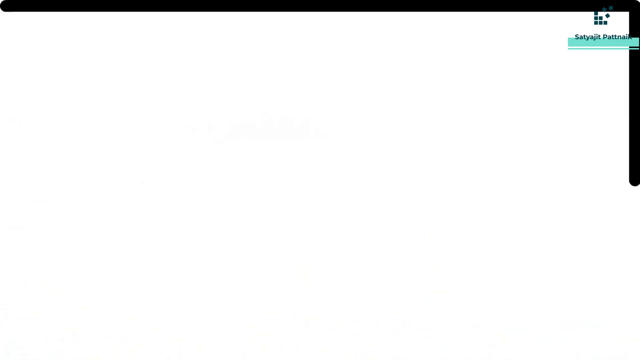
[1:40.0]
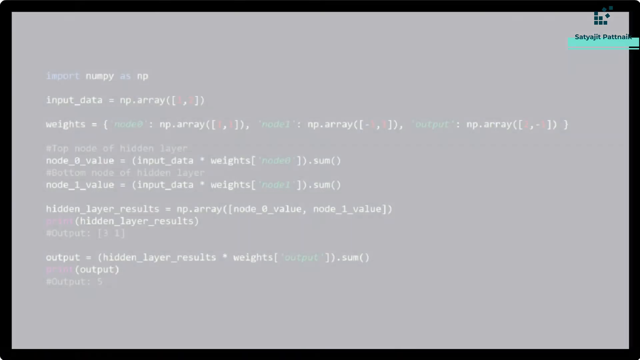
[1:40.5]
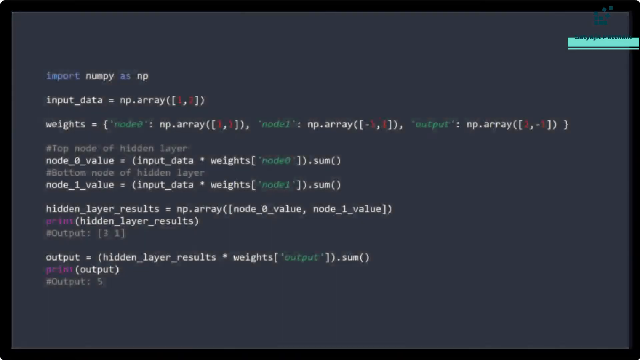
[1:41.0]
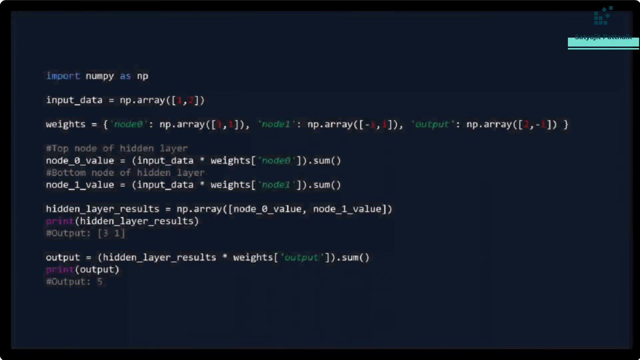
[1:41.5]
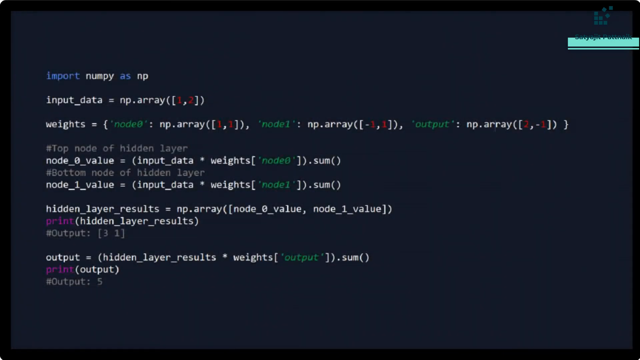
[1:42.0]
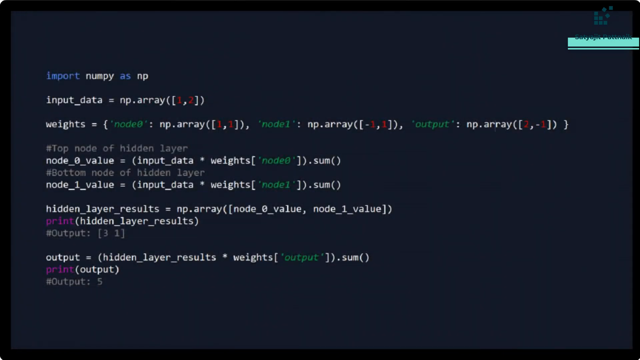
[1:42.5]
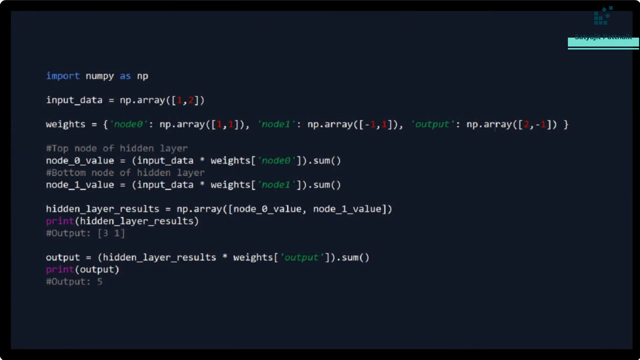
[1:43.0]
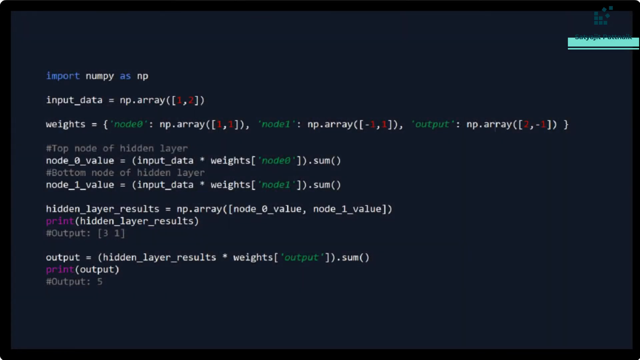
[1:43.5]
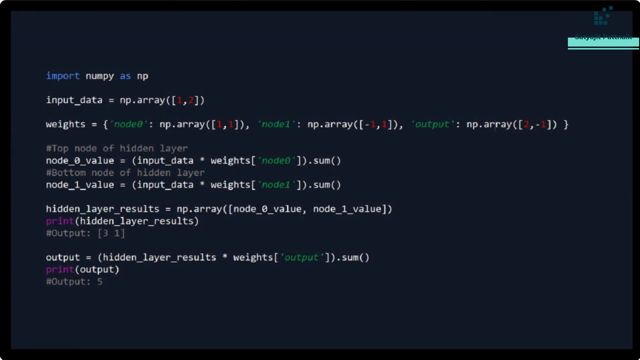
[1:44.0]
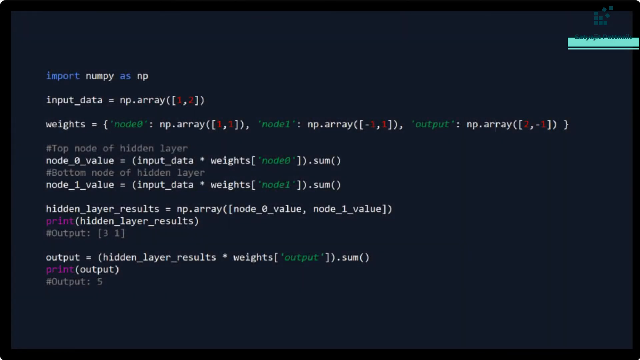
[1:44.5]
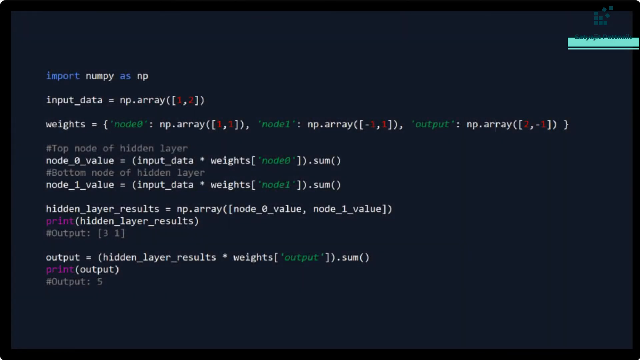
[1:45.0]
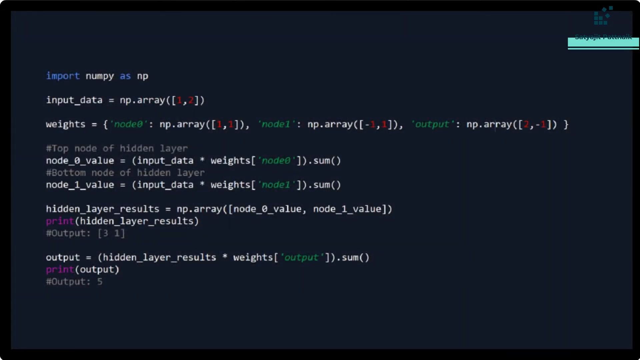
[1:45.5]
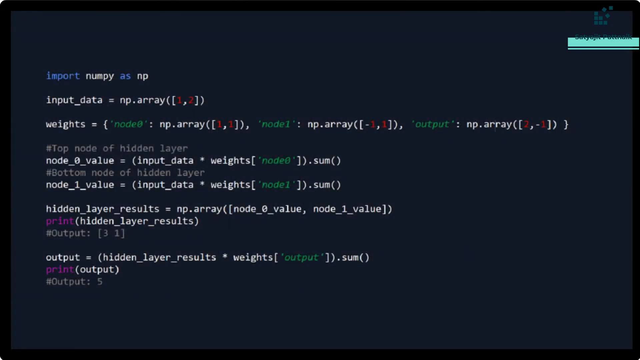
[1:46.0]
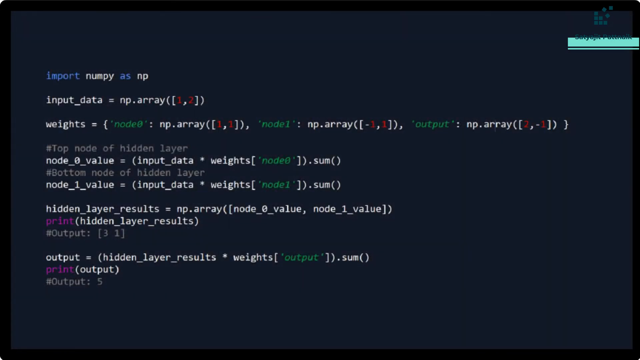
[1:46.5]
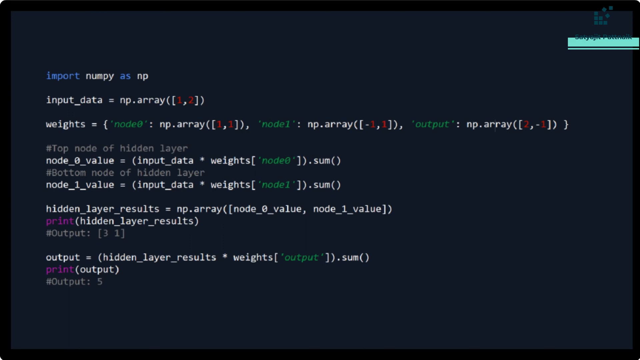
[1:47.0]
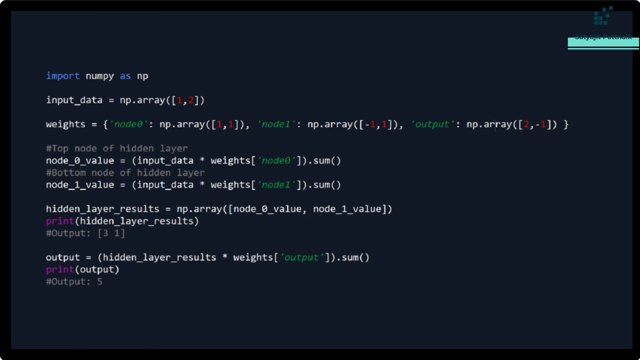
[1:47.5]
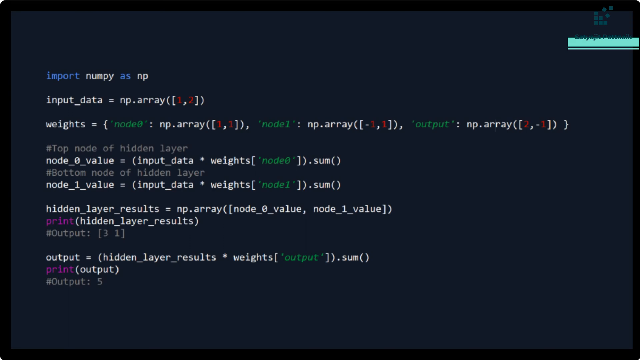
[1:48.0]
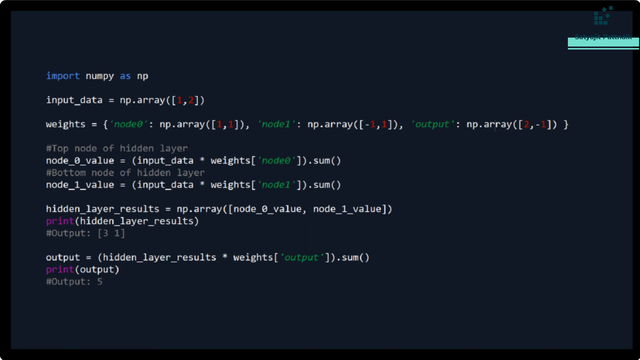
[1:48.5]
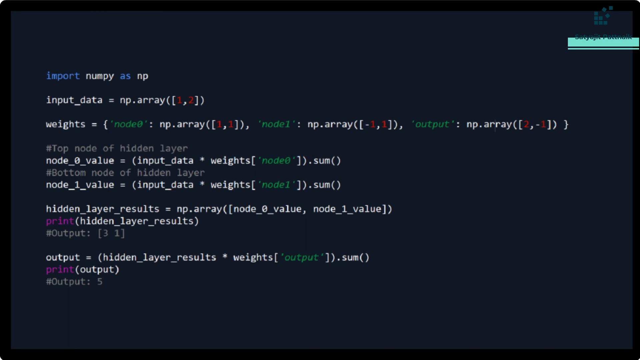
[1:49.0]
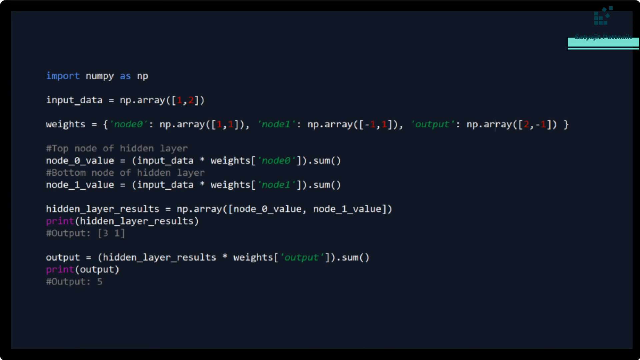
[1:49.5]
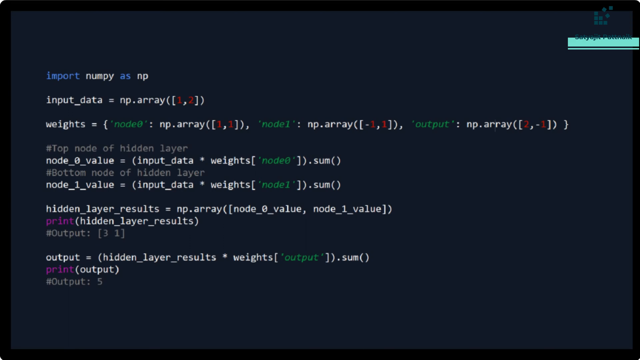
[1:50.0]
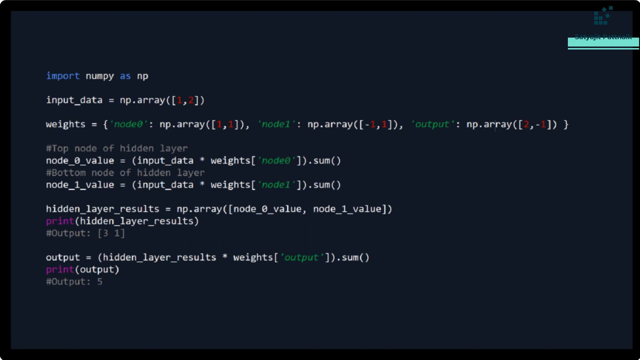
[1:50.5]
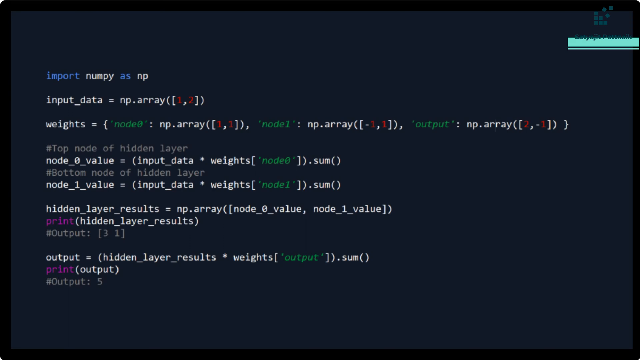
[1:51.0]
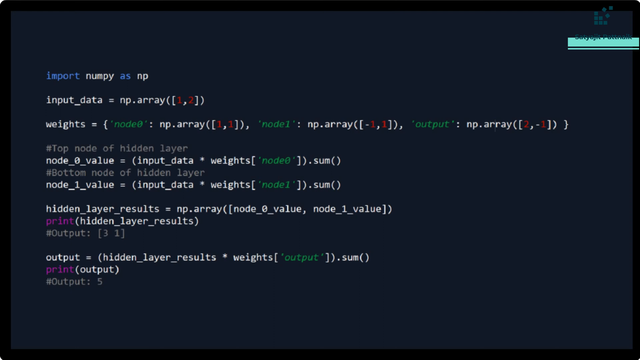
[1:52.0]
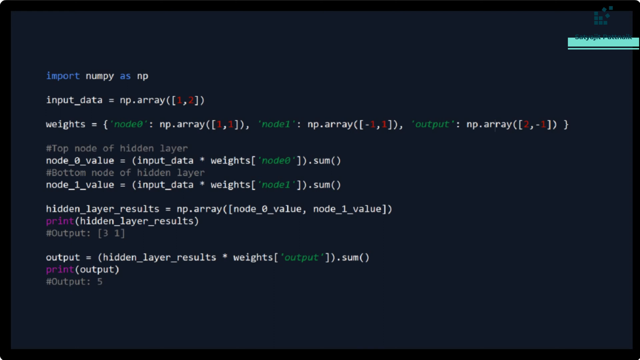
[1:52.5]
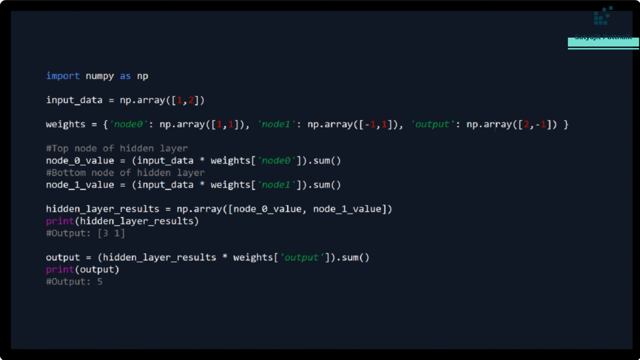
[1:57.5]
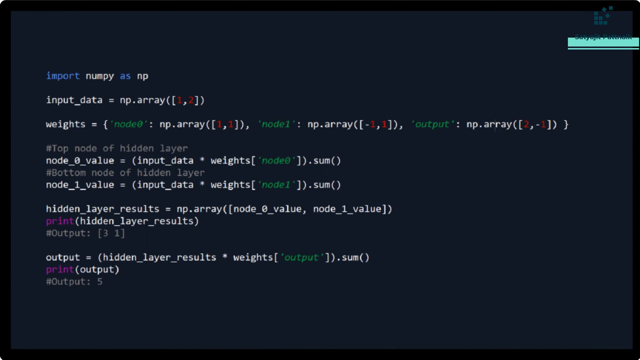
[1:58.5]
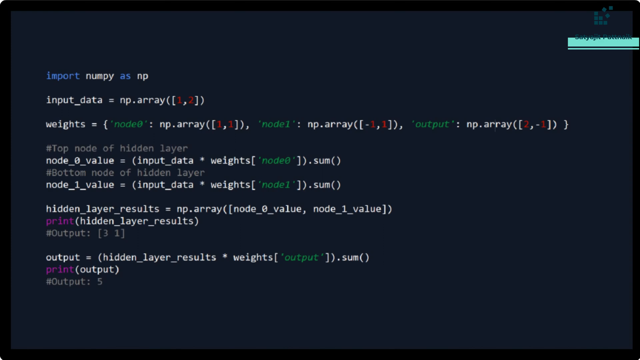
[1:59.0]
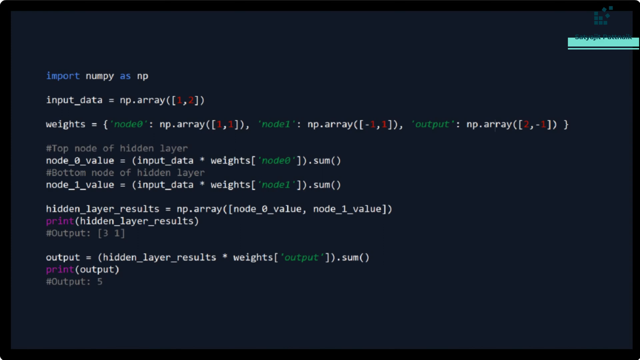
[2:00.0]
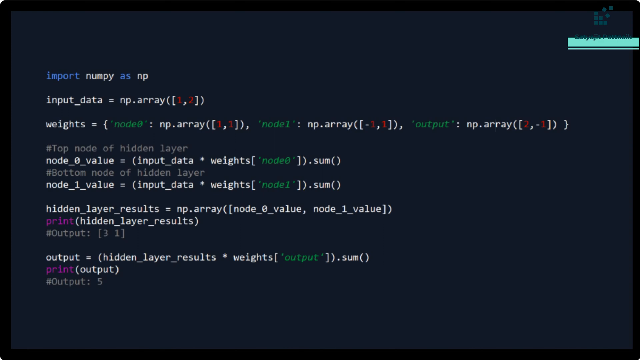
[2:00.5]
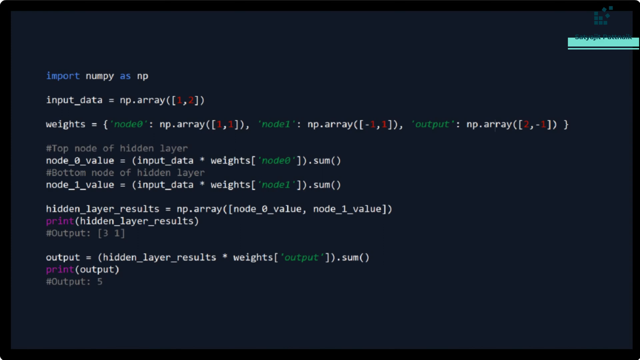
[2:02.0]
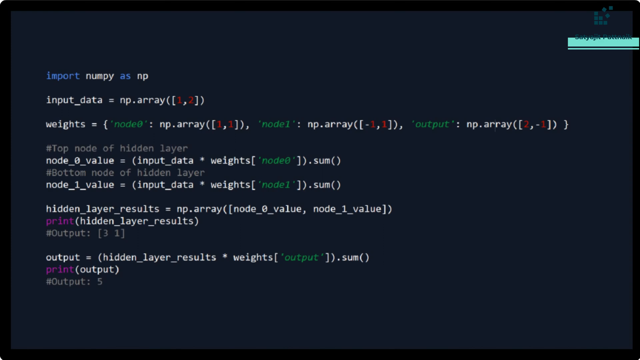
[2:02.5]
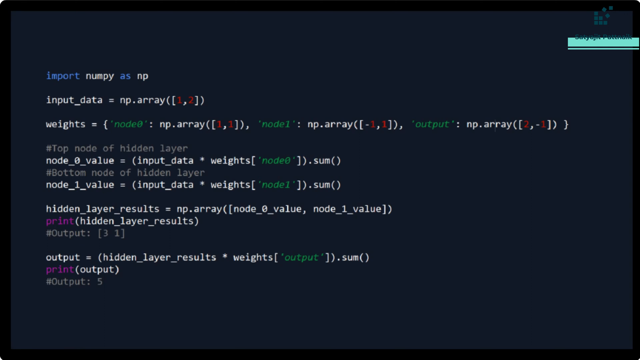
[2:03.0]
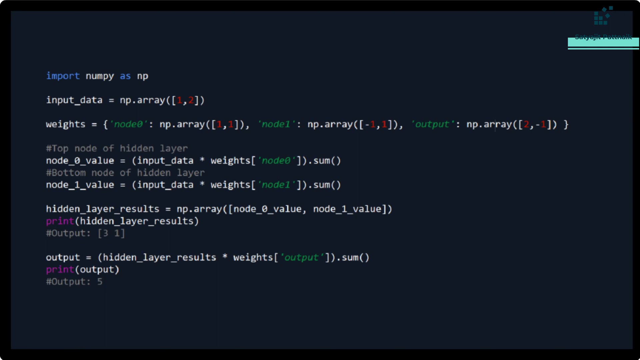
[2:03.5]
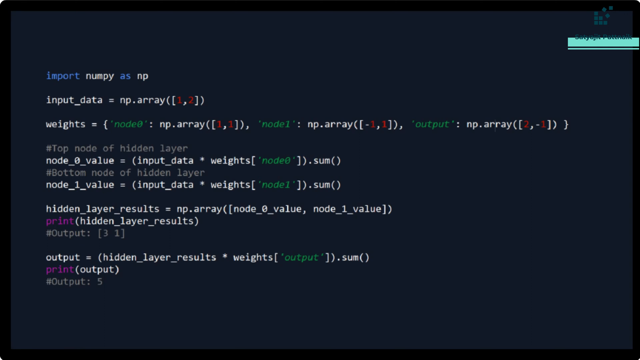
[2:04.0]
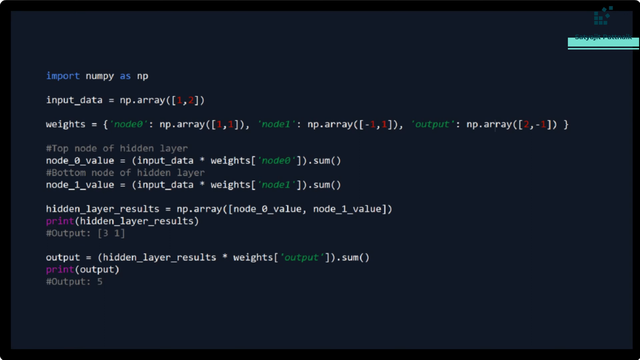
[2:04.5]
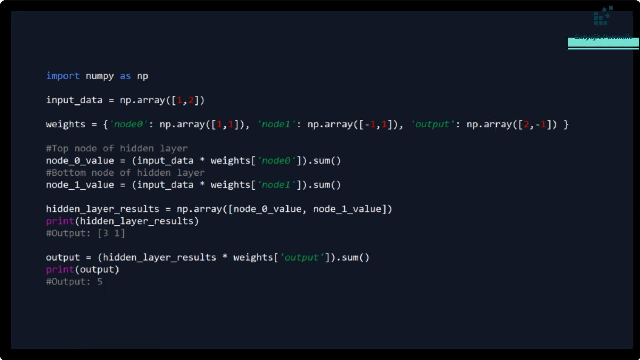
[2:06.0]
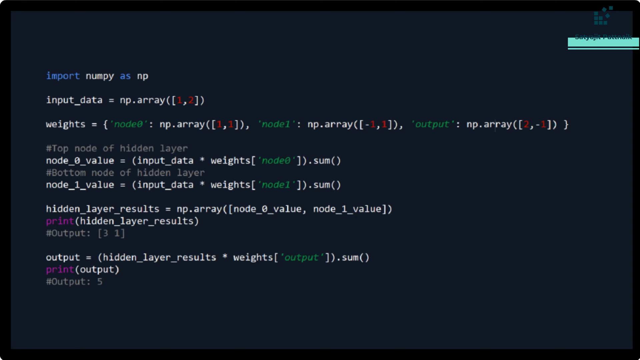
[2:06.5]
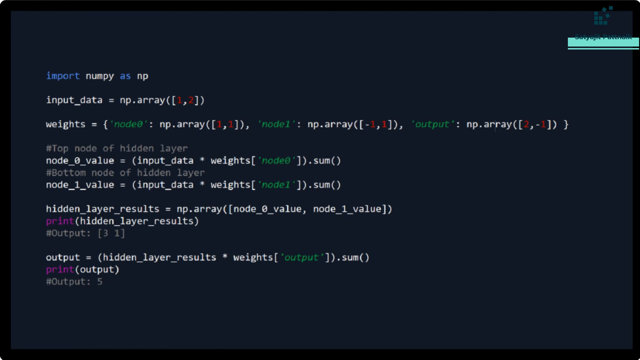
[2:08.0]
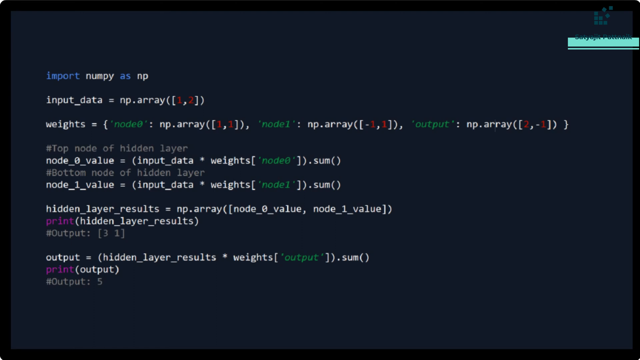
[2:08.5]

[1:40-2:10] A completely different scene appears. The slogan remains in the top right, though its color has changed slightly. The screen shows static text written in a programming format, in blue, white, red, green, purple and gray.